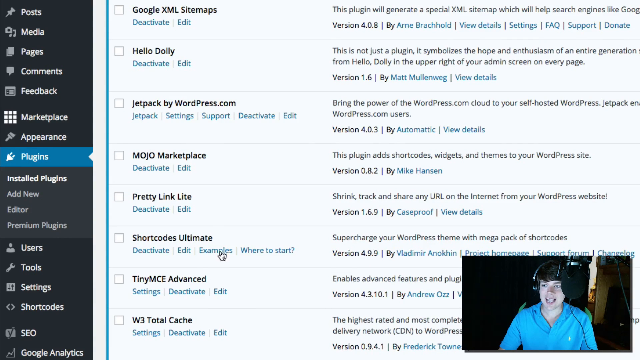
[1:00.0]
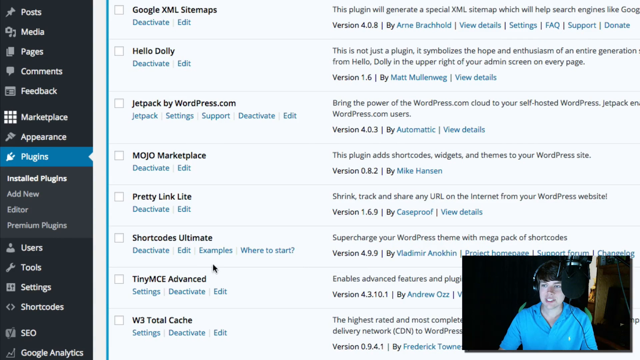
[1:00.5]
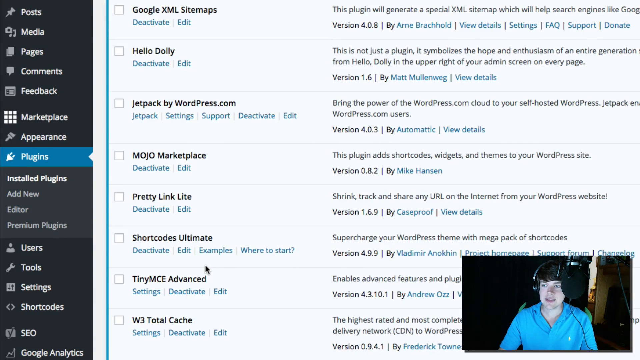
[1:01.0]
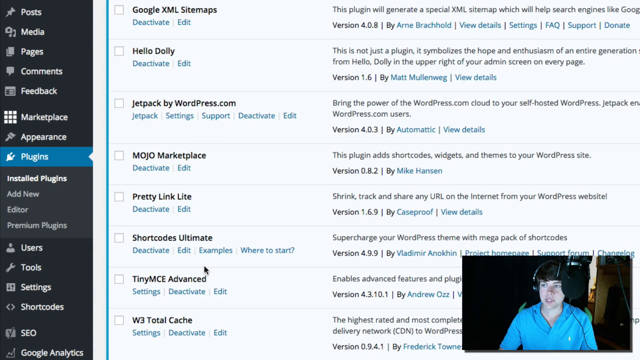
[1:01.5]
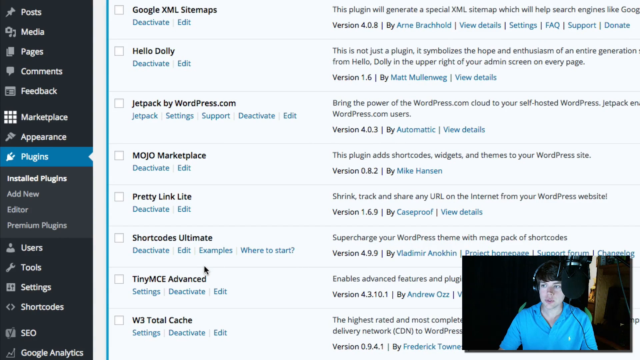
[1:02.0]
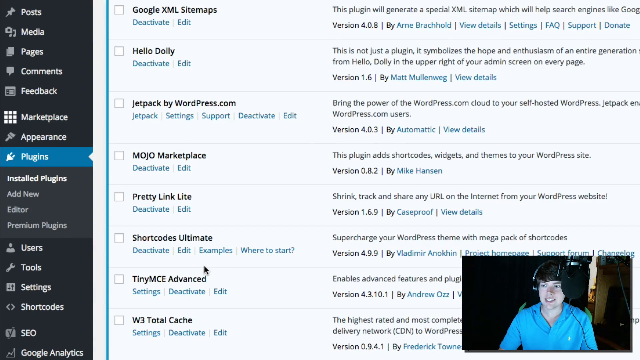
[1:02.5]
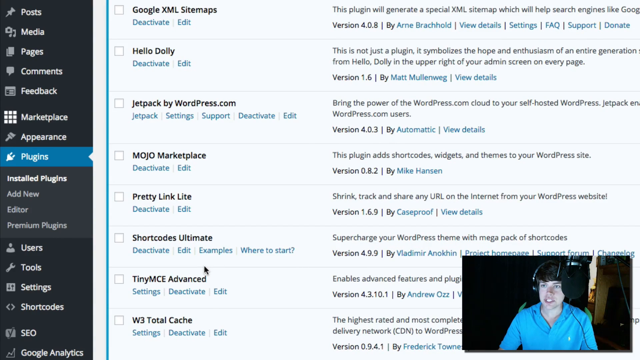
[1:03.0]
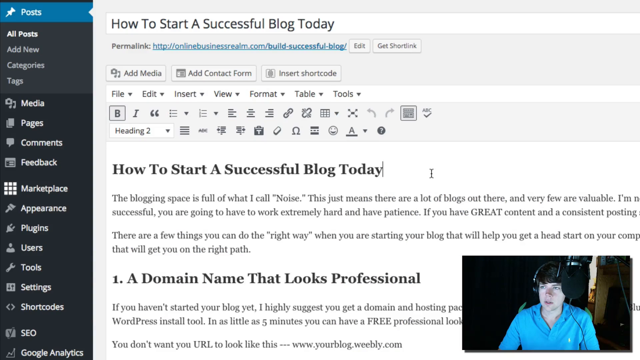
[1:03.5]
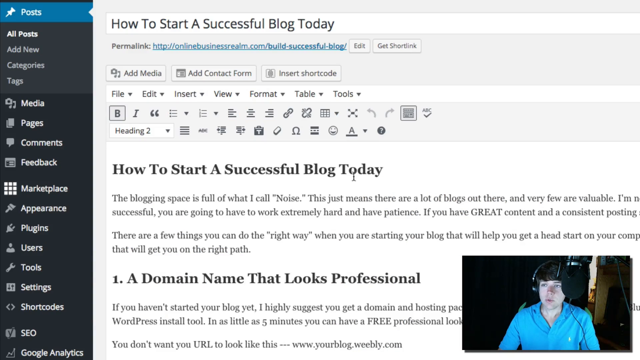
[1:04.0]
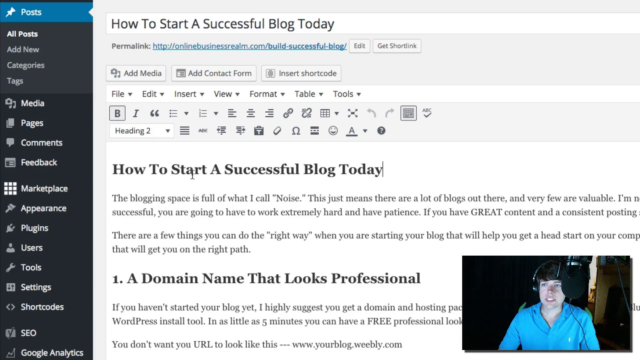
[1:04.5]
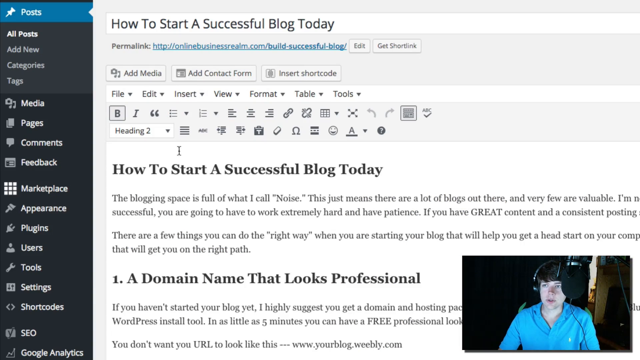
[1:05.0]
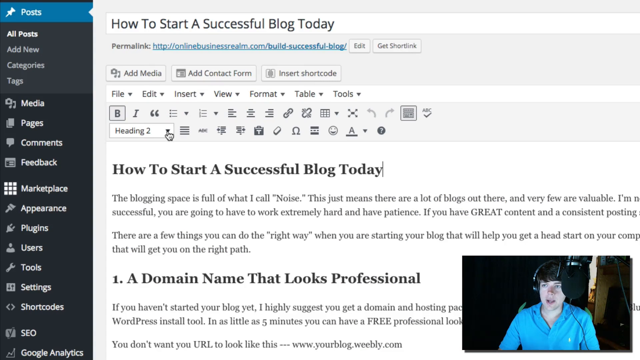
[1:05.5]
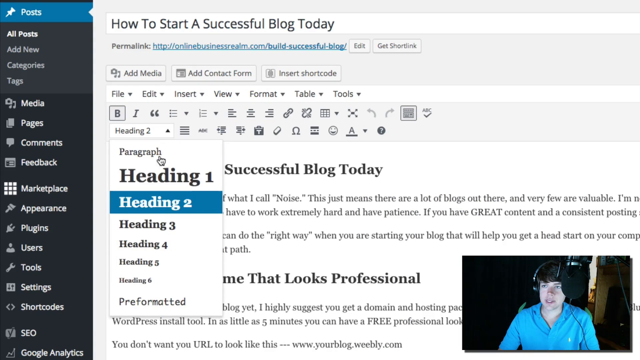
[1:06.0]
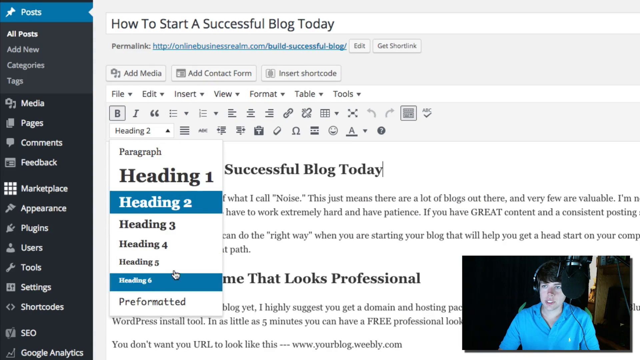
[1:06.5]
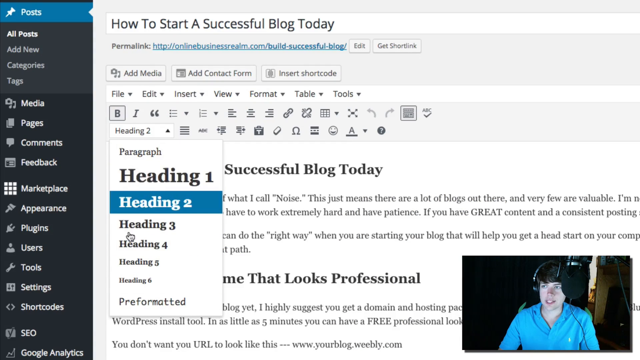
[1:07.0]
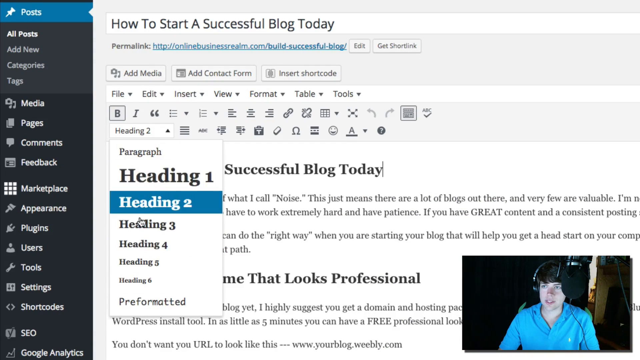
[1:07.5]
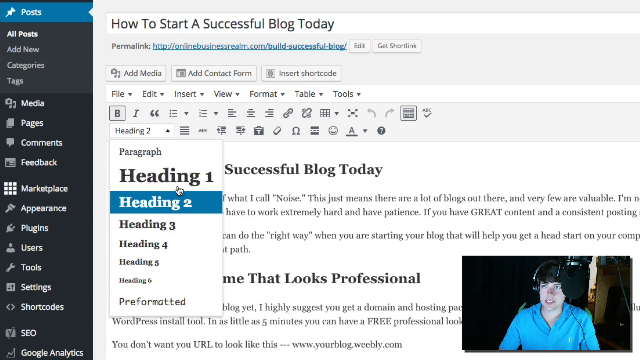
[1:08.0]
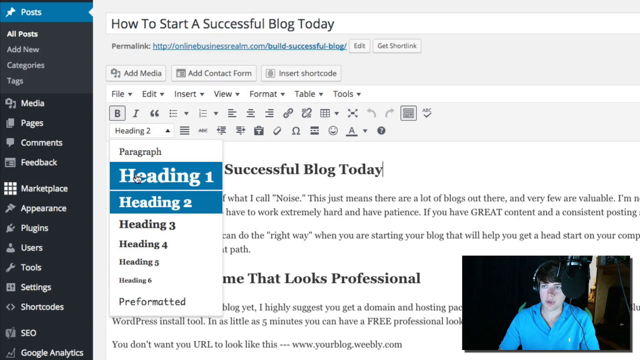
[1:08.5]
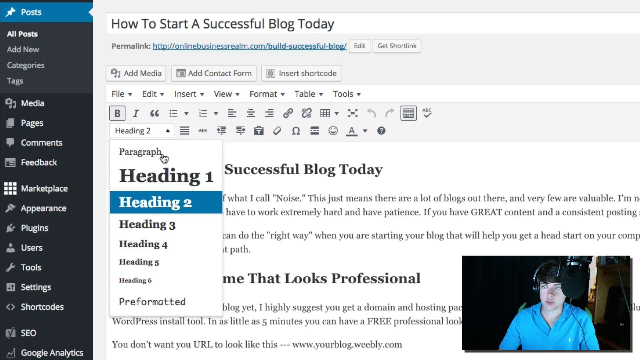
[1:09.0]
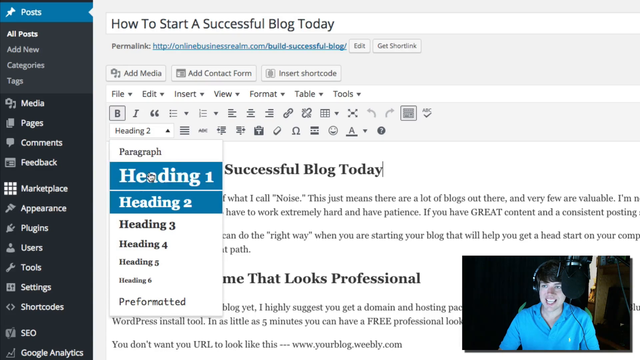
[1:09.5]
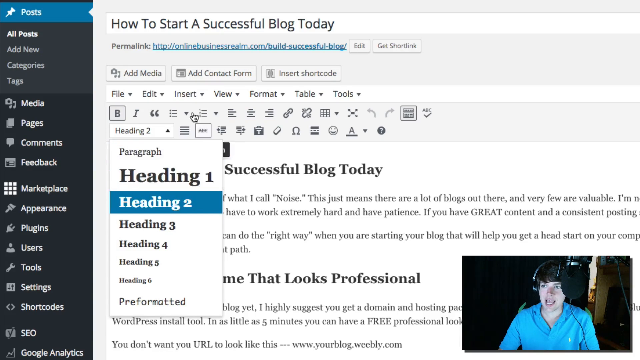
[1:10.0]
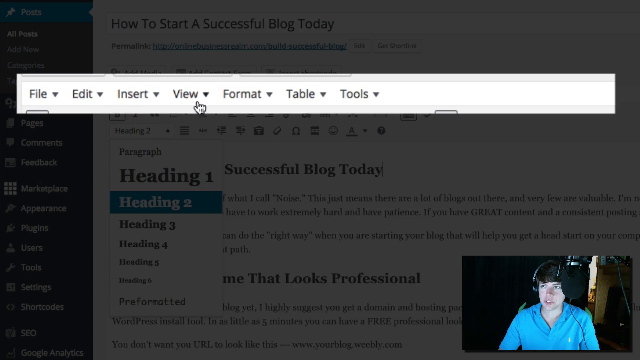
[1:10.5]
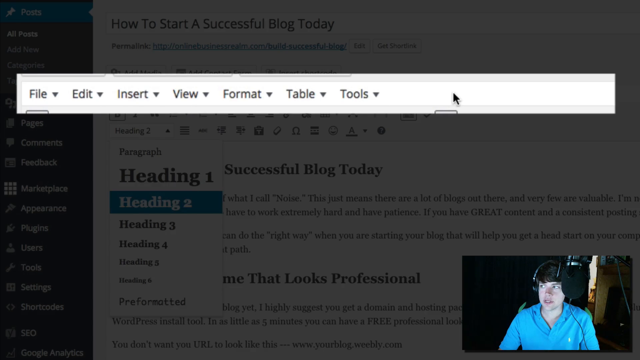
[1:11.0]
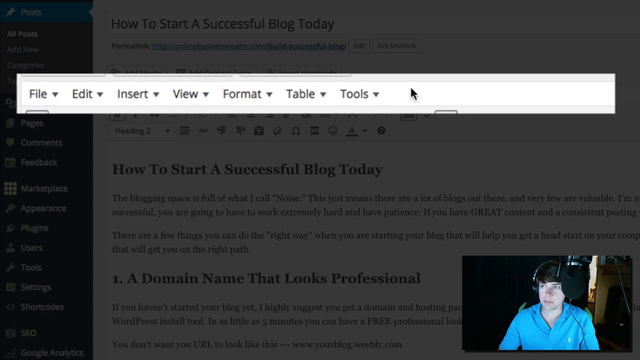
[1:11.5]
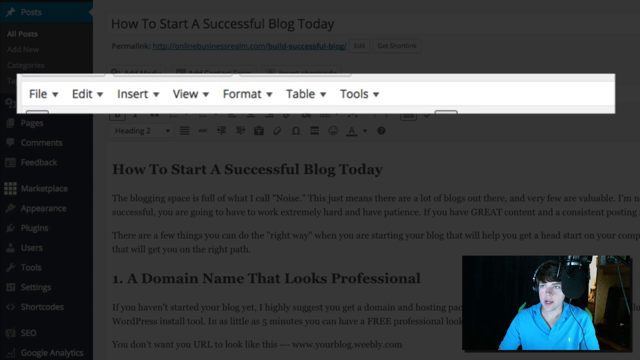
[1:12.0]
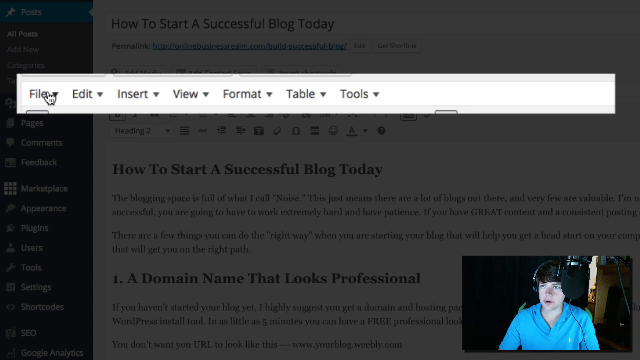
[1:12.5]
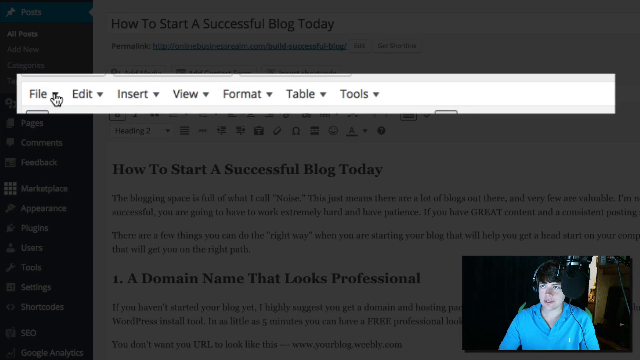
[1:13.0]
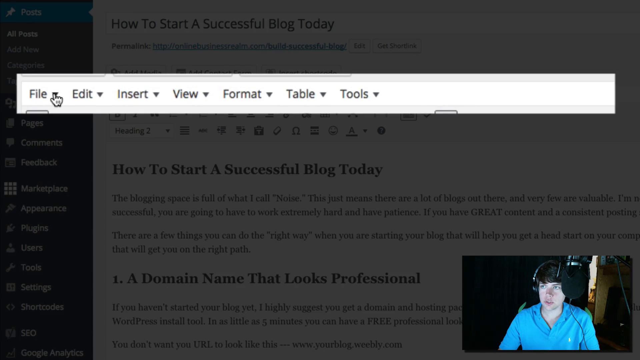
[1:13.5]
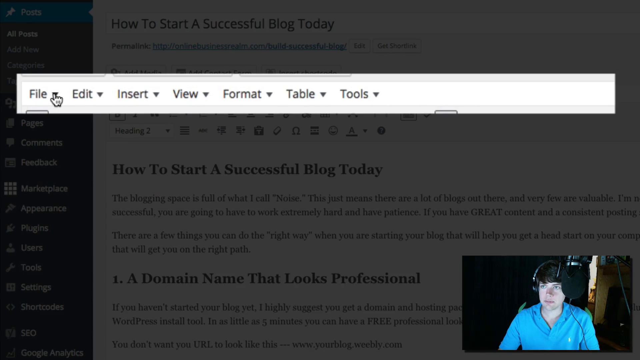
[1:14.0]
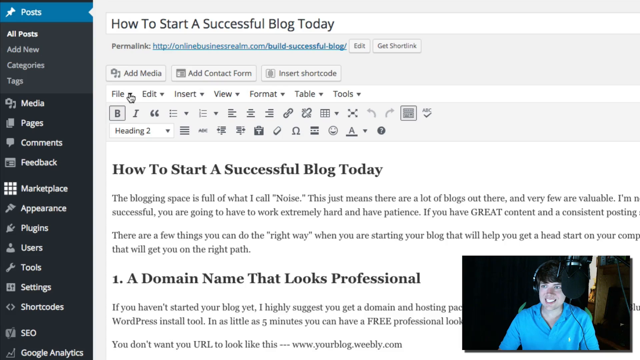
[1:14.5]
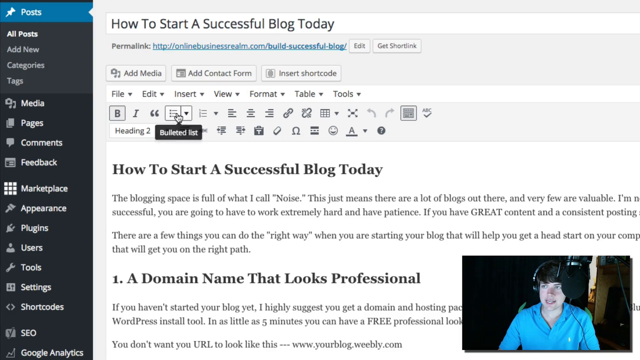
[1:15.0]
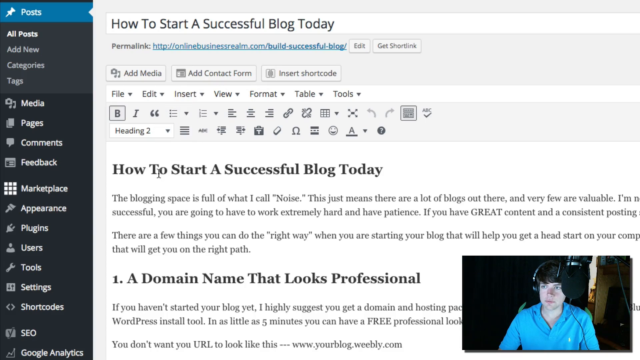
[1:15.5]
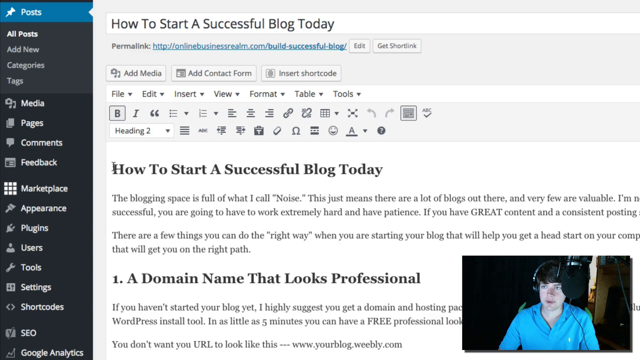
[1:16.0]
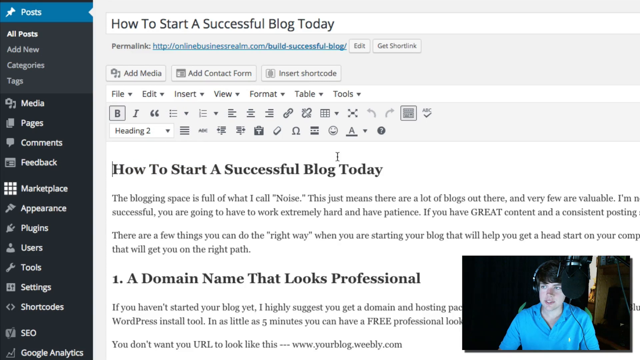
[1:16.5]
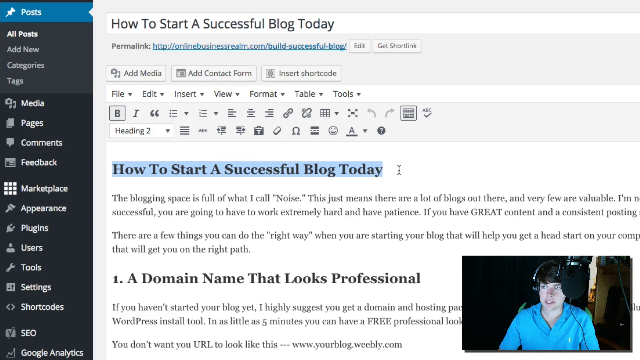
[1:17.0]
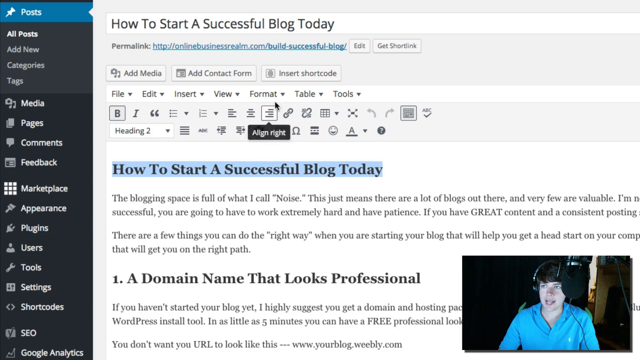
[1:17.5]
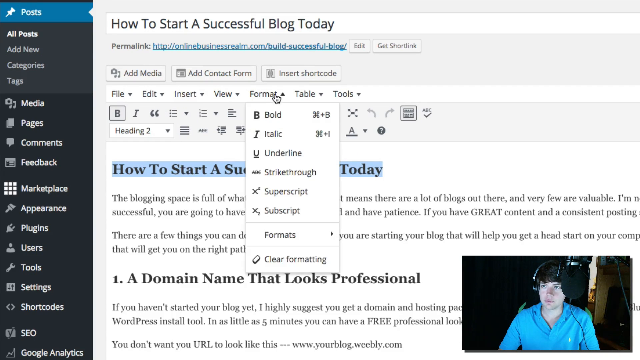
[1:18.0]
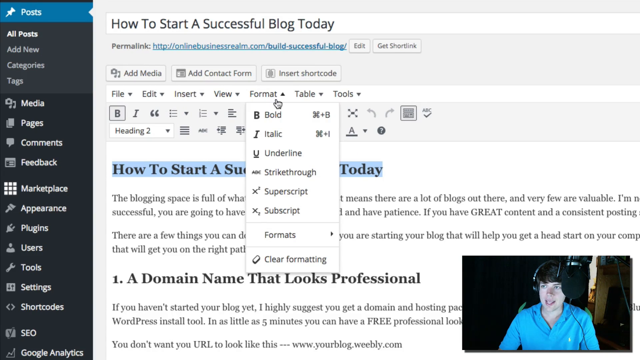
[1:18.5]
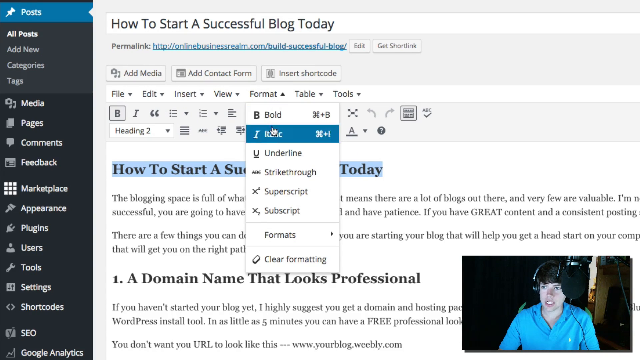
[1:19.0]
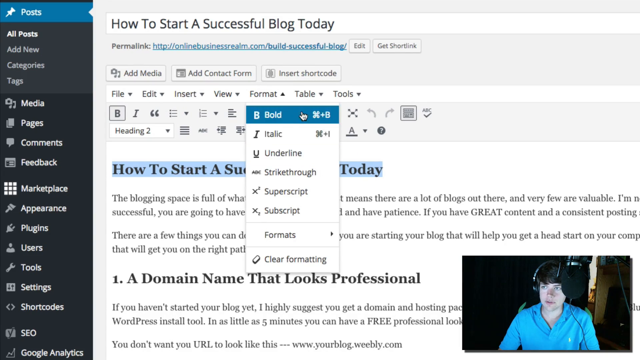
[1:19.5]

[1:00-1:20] The video shows the Plugins page, or the Plugins tab above it, of a Google web page. A live feed in the bottom right-hand corner shows a young man giving a podcast; he wears a blue shirt with a couple of buttons open at the top, over-the-ear headphones and a boom mic, and he is talking about the plugins. He spins his mouse around in small circles, then goes back to the headings, scrolling up and down through the headings and the tools very fast. He then goes back to the format menu, showing bold, italics and other options, scrolling rapidly up and down the list to highlight them.